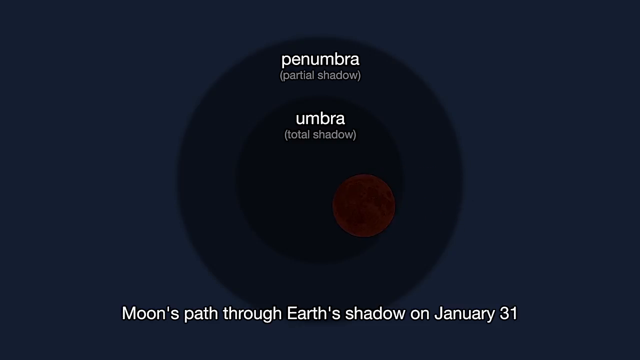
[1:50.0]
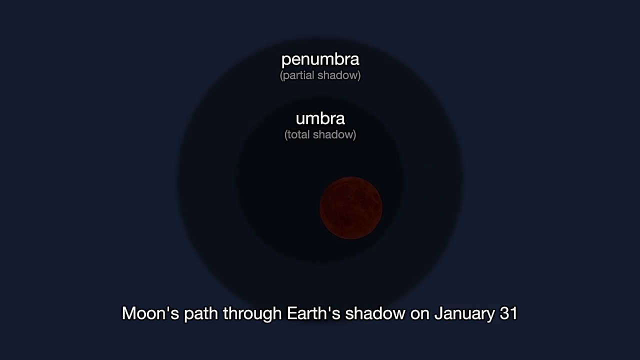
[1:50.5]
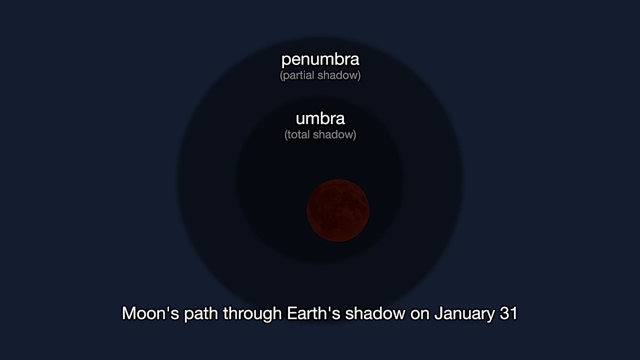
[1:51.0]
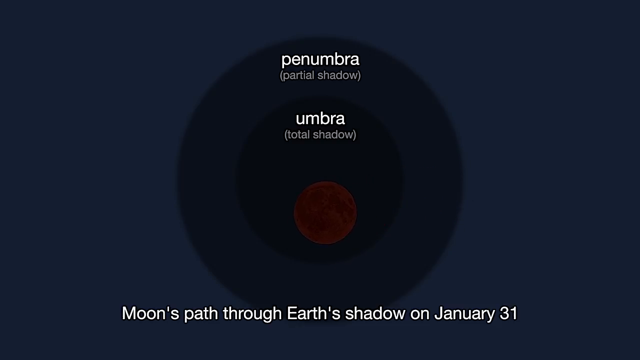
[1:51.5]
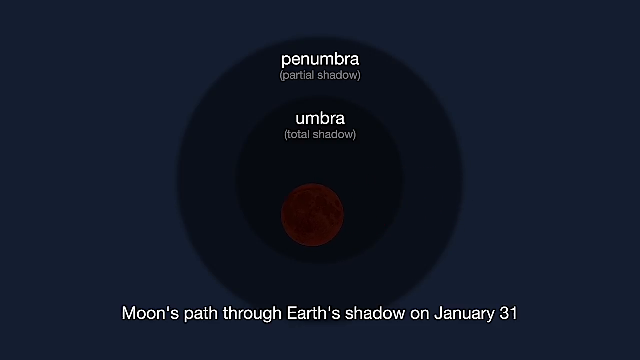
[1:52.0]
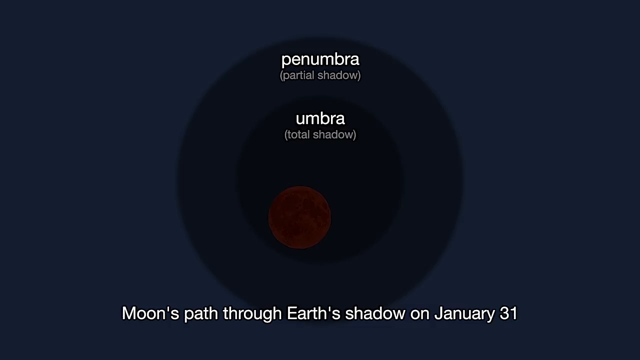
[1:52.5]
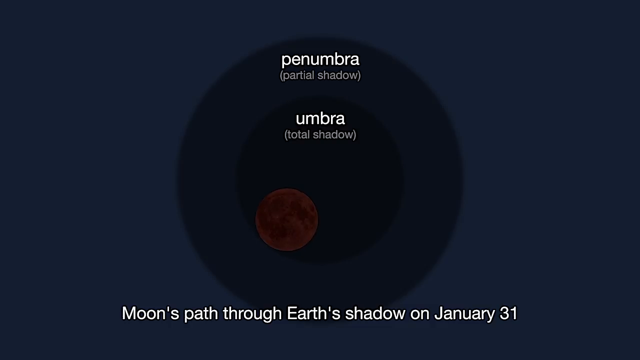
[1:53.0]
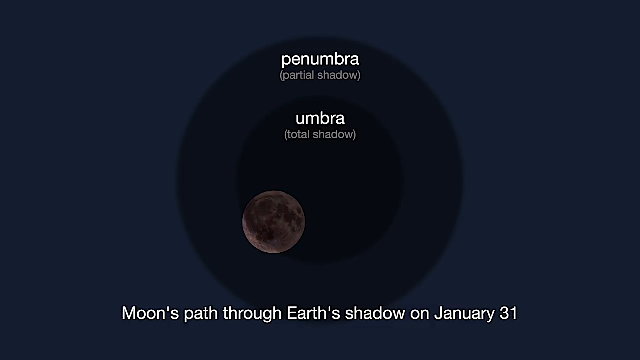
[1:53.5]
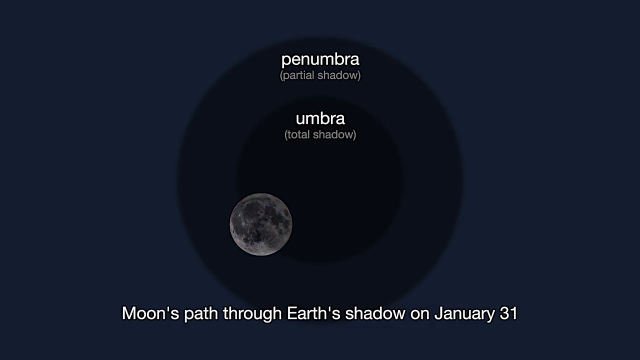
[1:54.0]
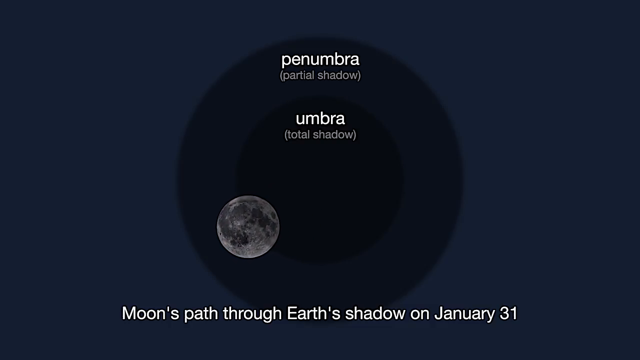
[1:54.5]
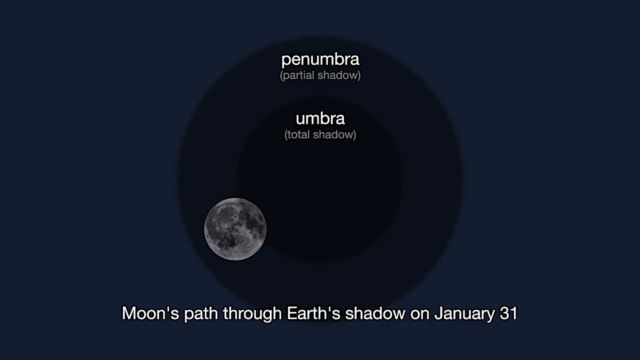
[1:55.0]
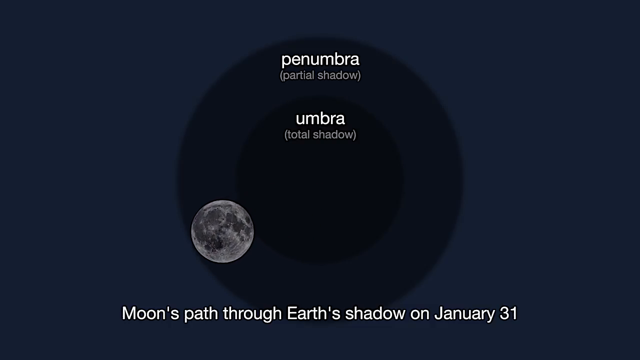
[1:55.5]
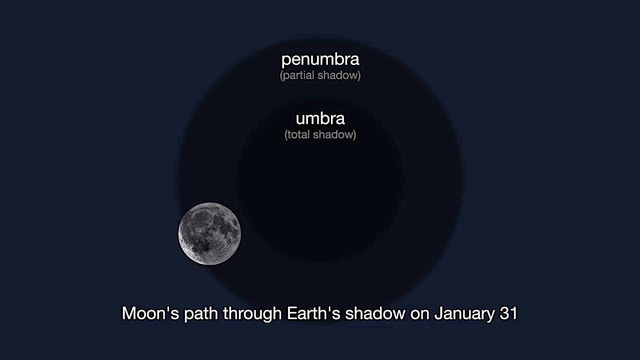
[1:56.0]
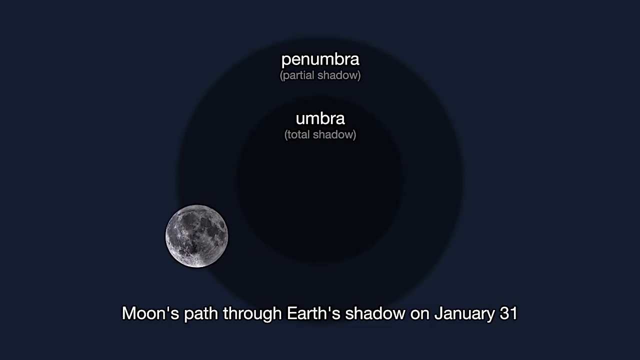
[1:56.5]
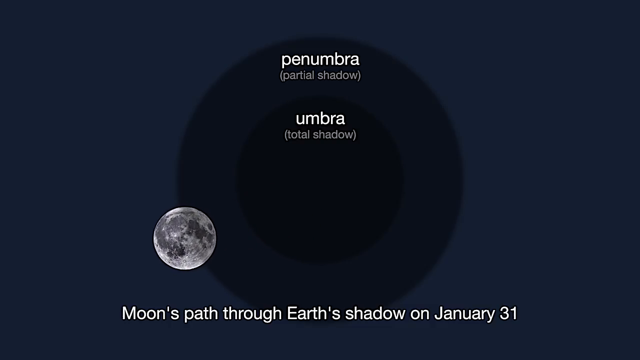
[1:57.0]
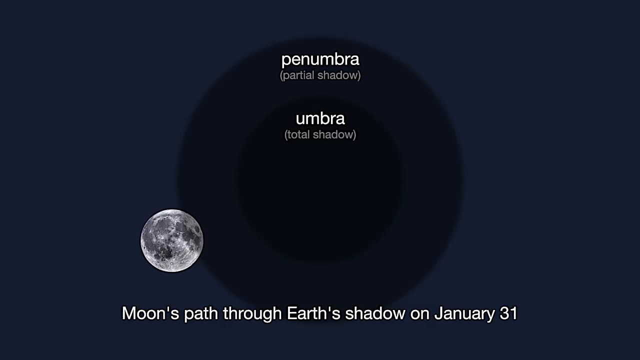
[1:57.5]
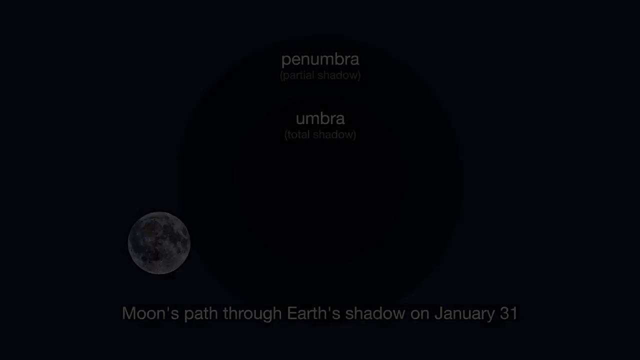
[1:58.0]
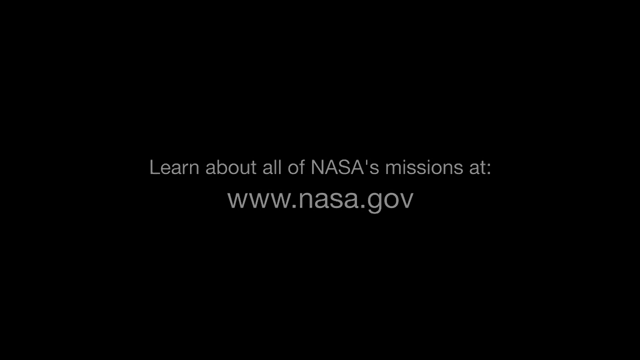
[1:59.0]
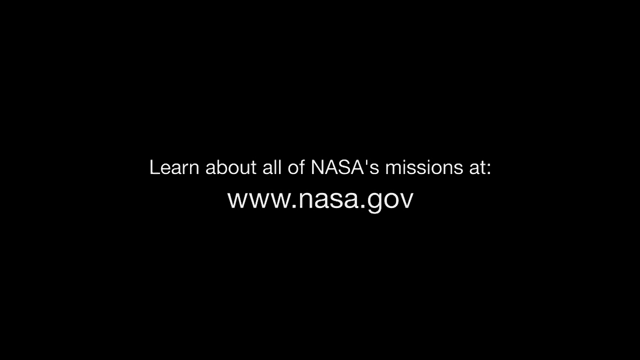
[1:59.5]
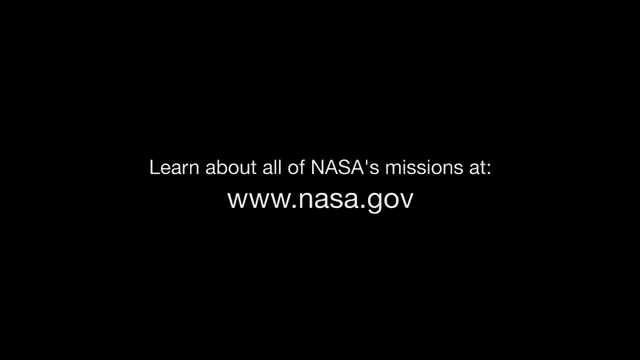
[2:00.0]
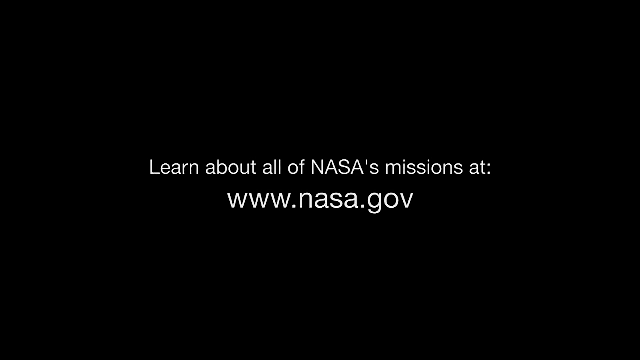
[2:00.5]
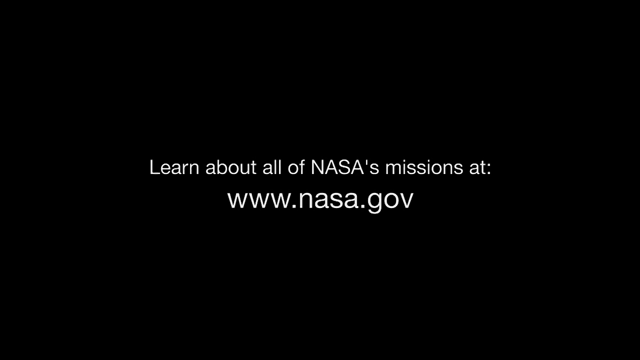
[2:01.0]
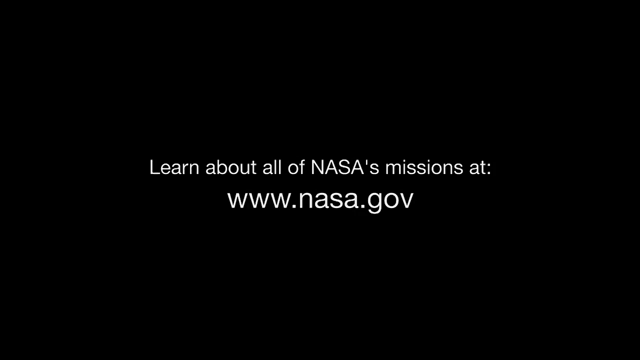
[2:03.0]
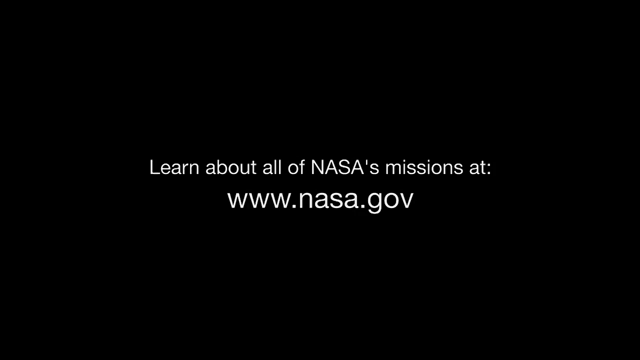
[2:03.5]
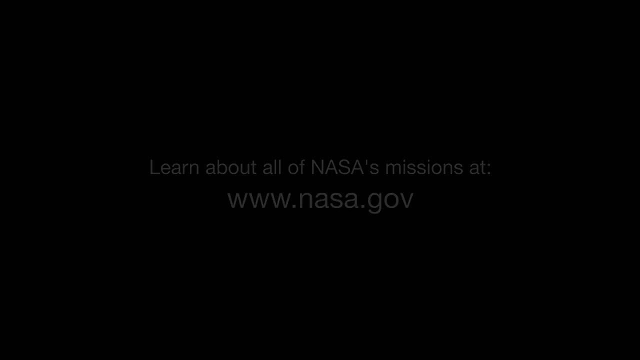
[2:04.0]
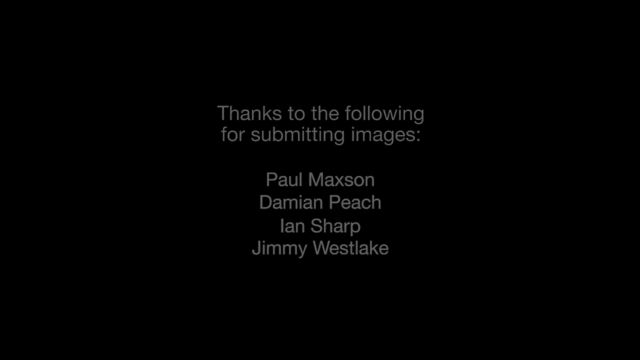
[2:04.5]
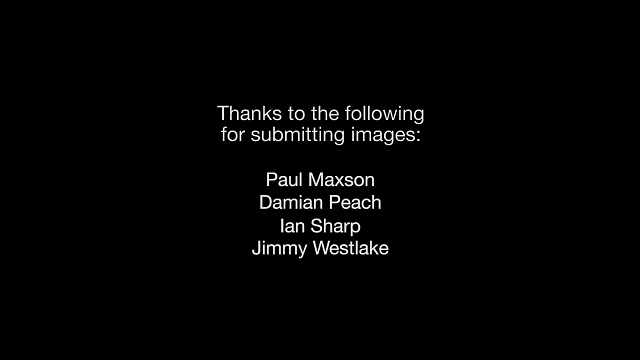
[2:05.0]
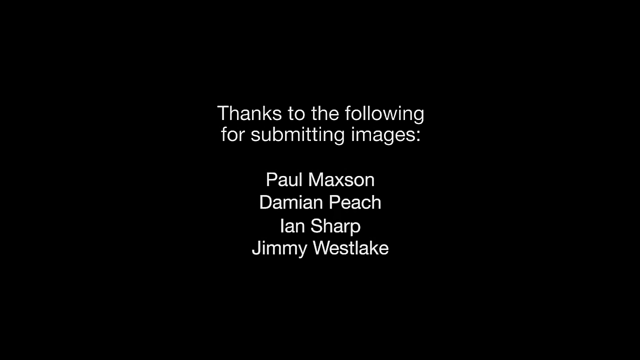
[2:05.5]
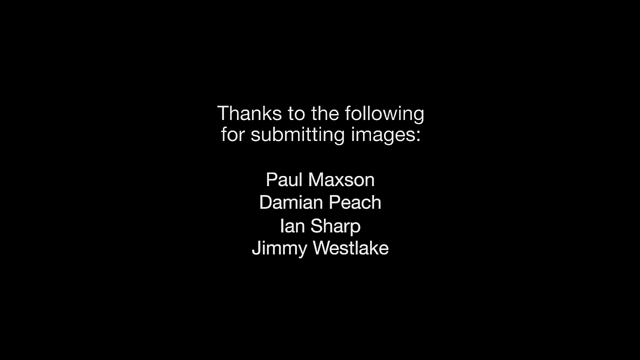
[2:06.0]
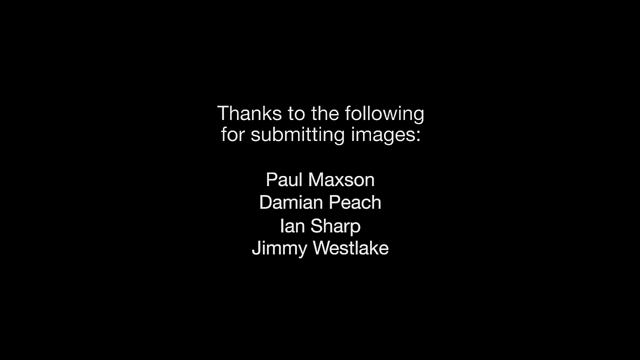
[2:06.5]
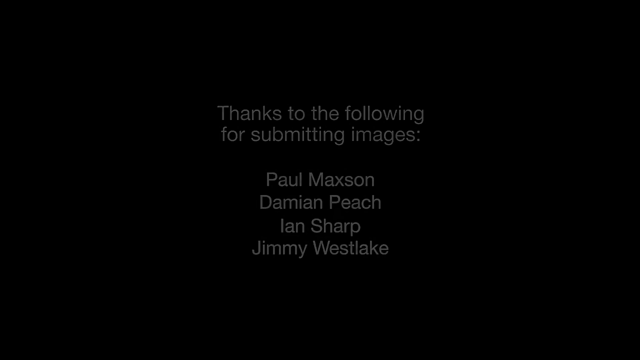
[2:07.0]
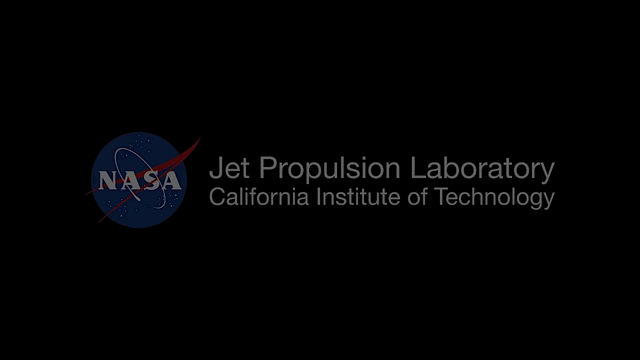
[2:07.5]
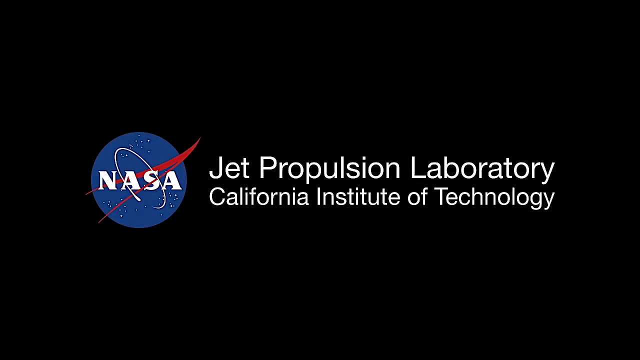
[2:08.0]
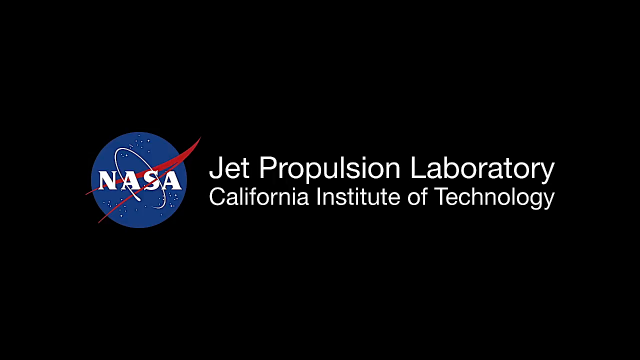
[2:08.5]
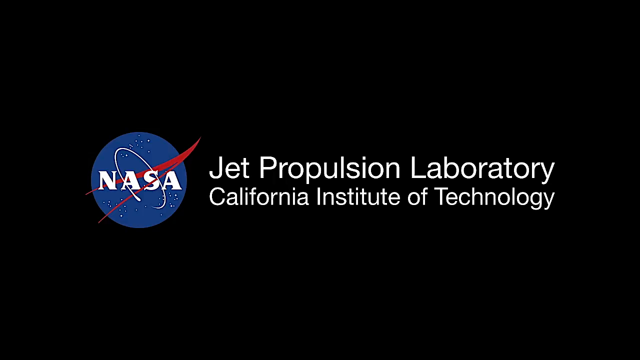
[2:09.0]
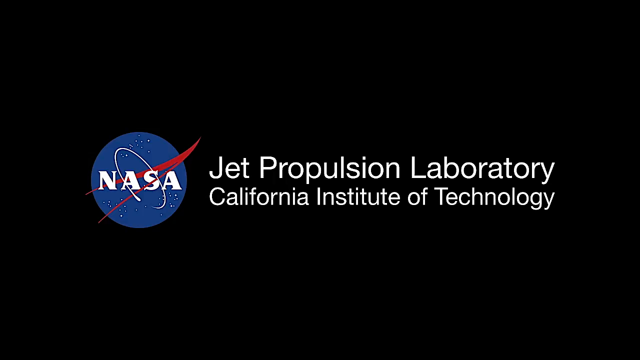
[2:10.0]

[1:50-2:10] A diagram shows the penumbra and umbra, the partial shadow and total shadow, of a lunar eclipse, with the moon moving behind the shadow area. Text reads "the moon's path through earth's shadow on January 31st." The moon moves from the right side of the screen to the left, passing through the Earth's shadow in the center of the screen. Text then reads "learn about all of NASA's missions at www.nasa.gov." Credits follow, reading "thanks to the following for submitting images Paul Maxson, Damien Peach, Ian Sharp, and Jimmy Westlake." The very end shows the NASA logo on the left and the title "Jet Propulsion Laboratory California Institute of Technology."